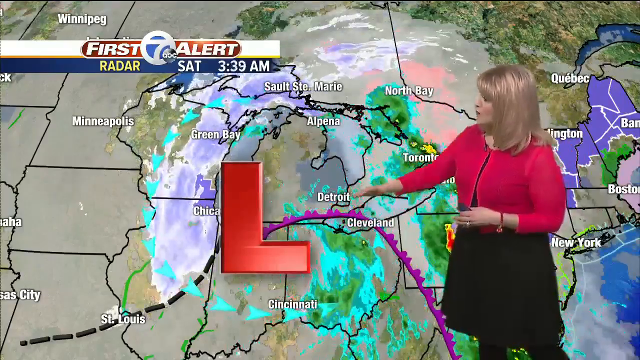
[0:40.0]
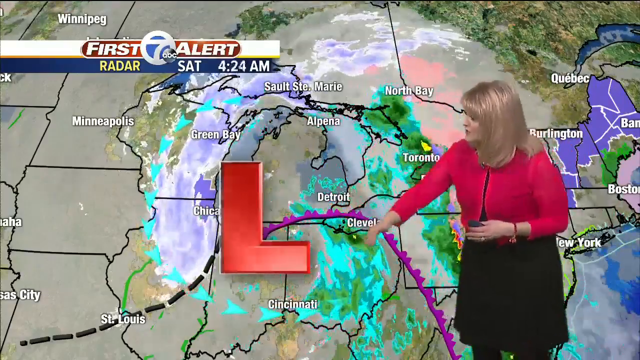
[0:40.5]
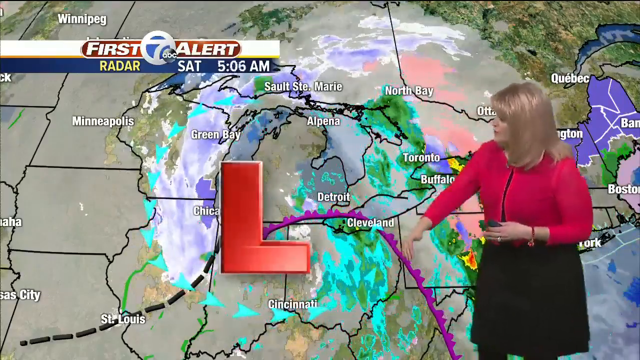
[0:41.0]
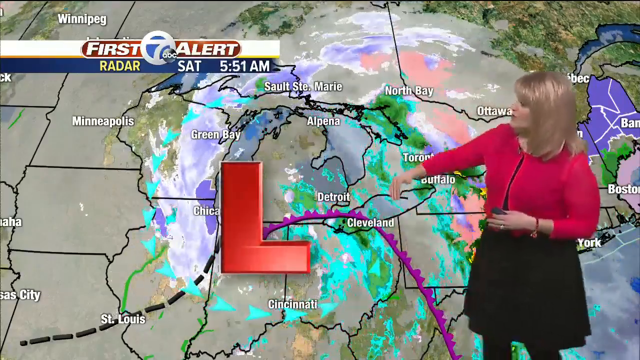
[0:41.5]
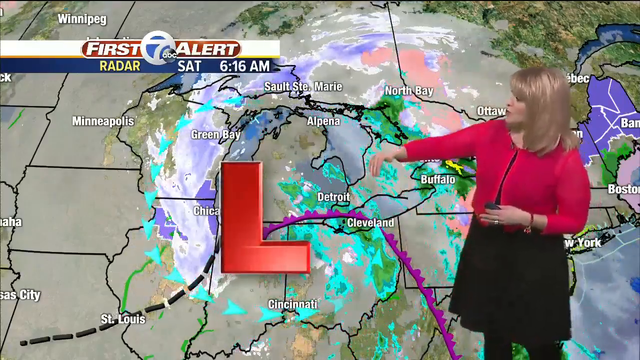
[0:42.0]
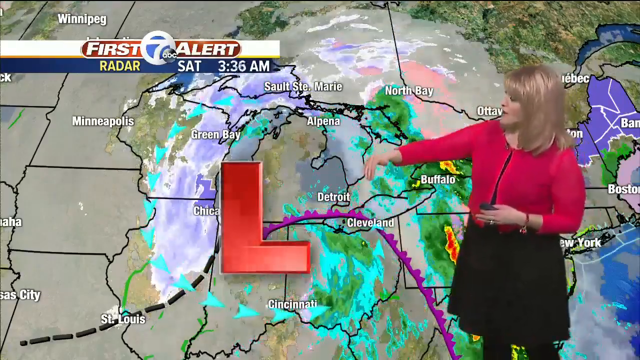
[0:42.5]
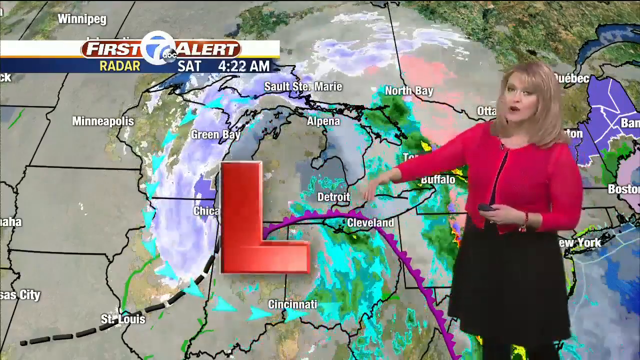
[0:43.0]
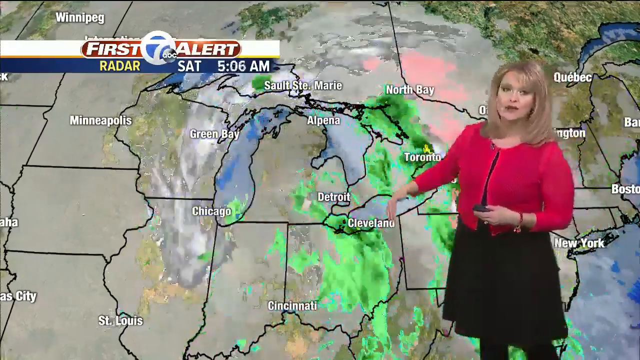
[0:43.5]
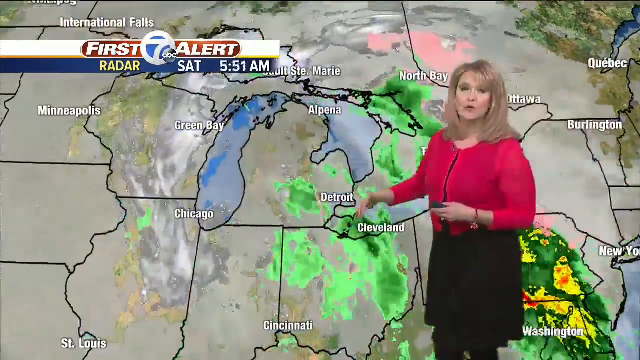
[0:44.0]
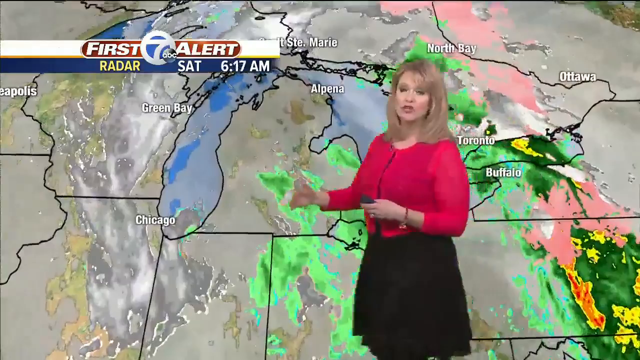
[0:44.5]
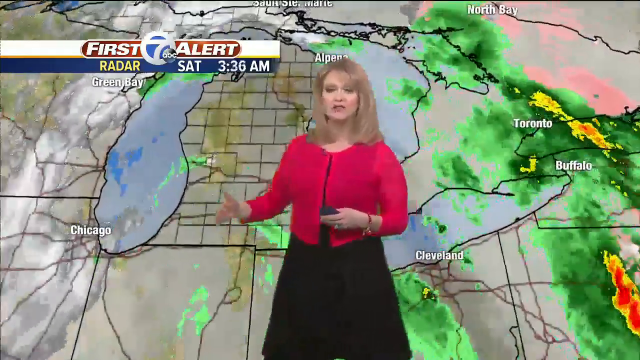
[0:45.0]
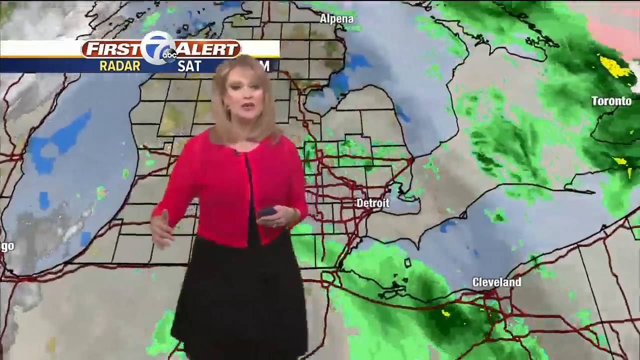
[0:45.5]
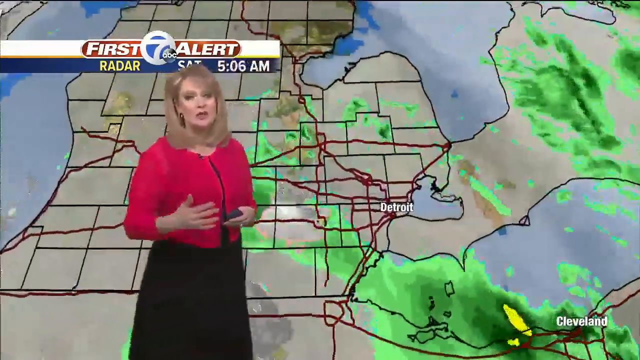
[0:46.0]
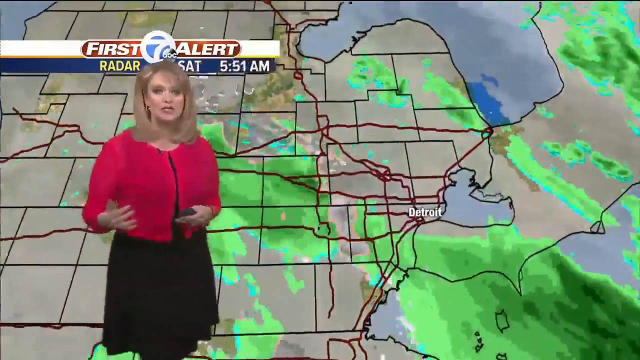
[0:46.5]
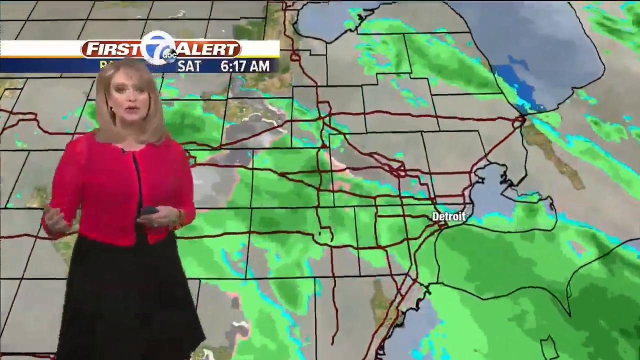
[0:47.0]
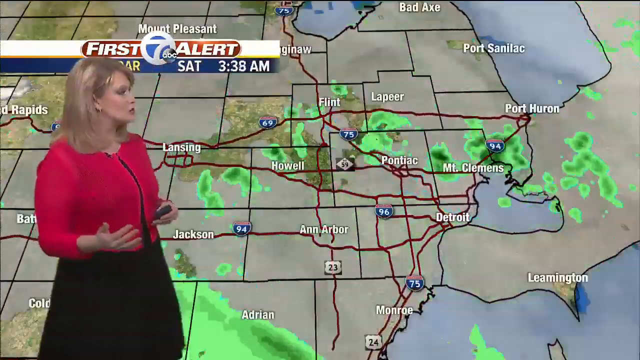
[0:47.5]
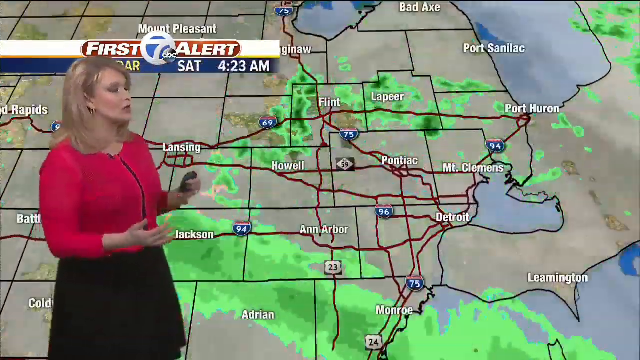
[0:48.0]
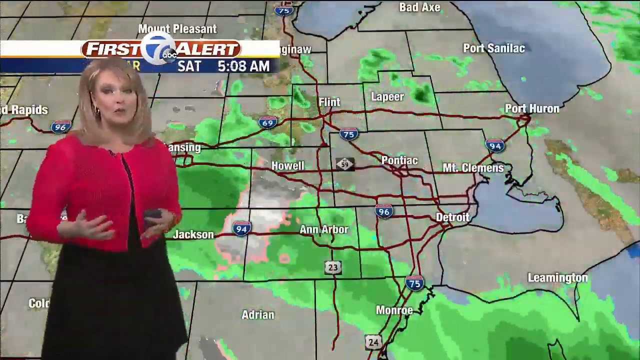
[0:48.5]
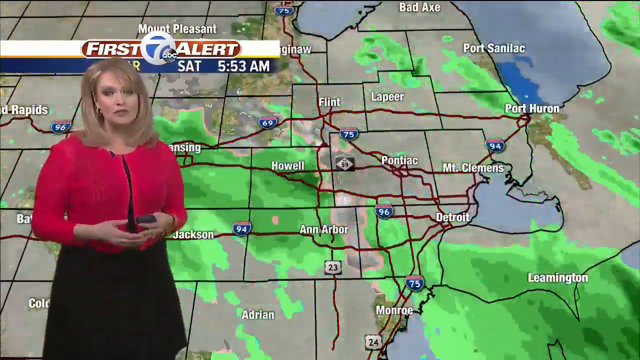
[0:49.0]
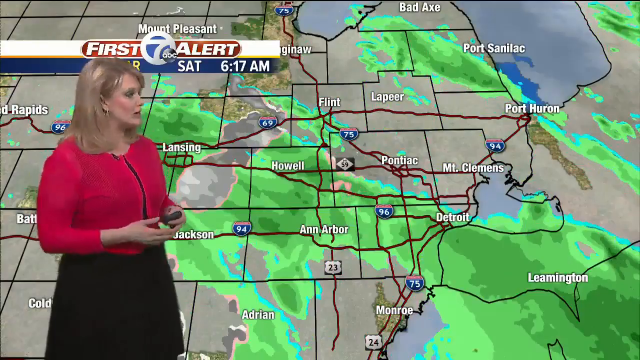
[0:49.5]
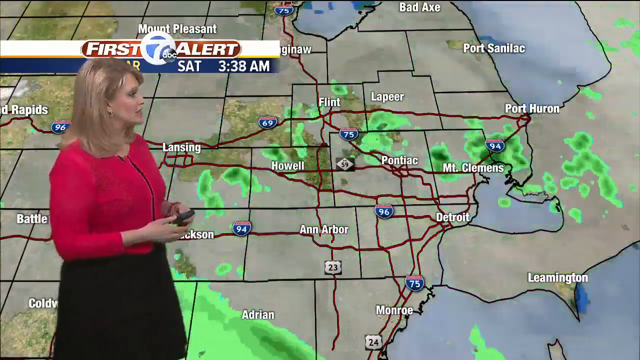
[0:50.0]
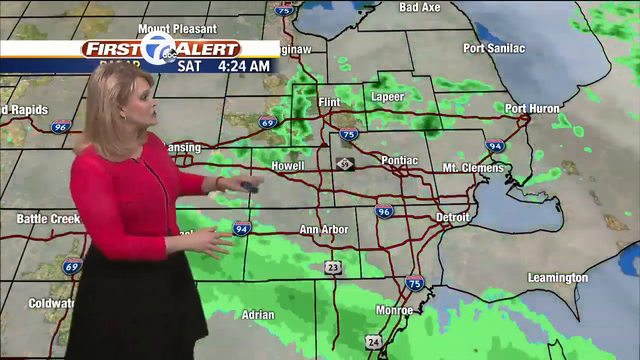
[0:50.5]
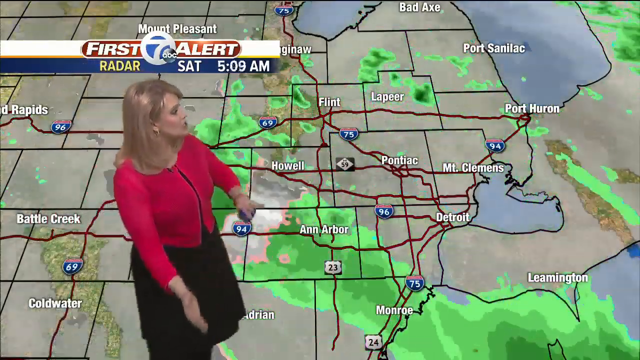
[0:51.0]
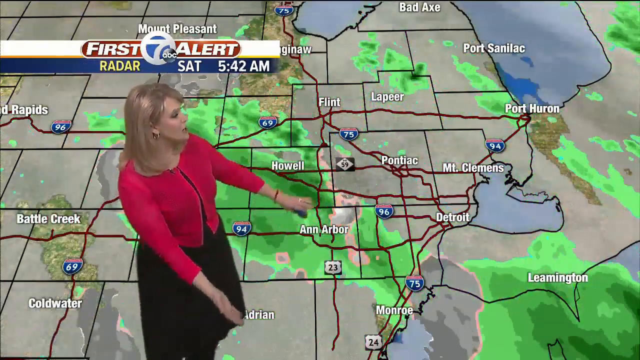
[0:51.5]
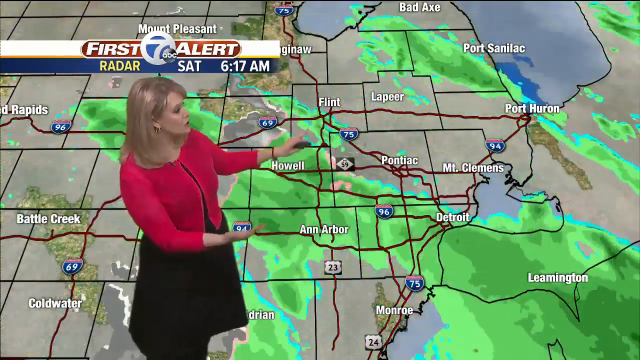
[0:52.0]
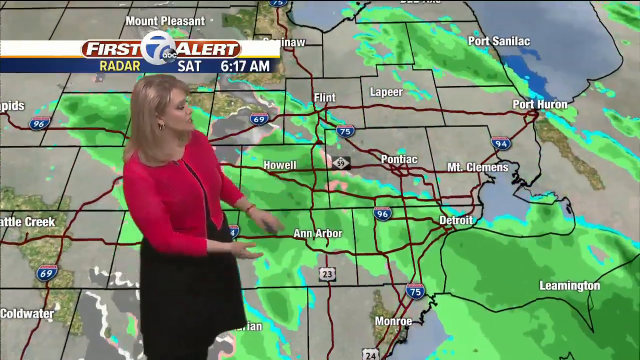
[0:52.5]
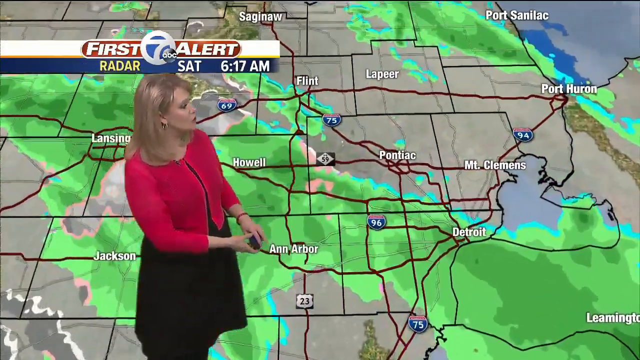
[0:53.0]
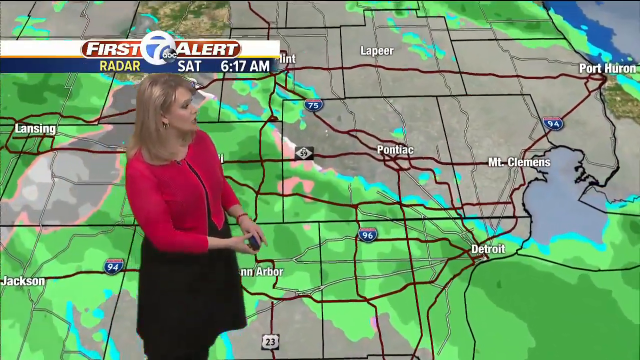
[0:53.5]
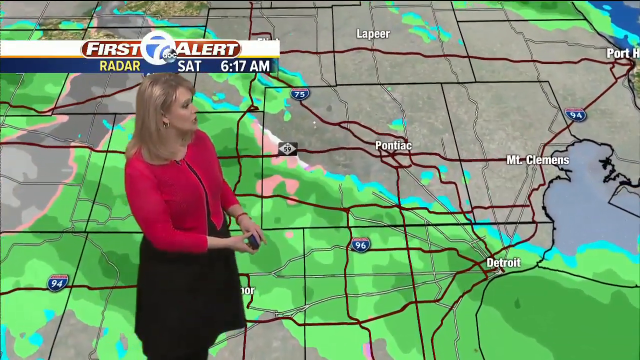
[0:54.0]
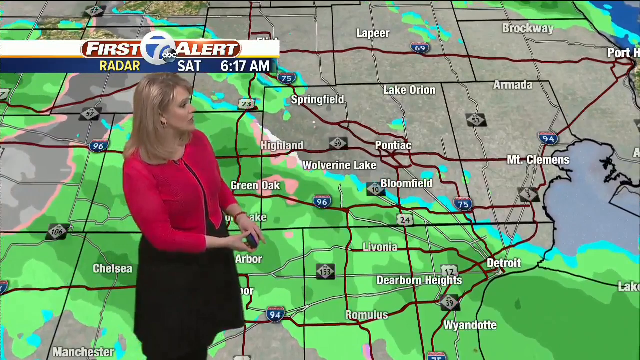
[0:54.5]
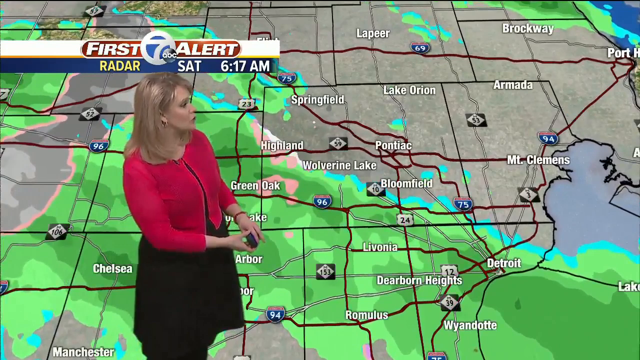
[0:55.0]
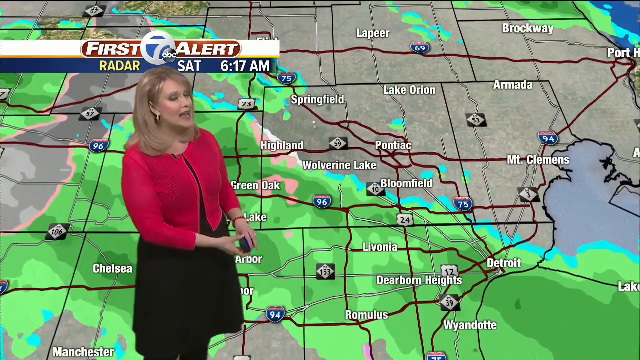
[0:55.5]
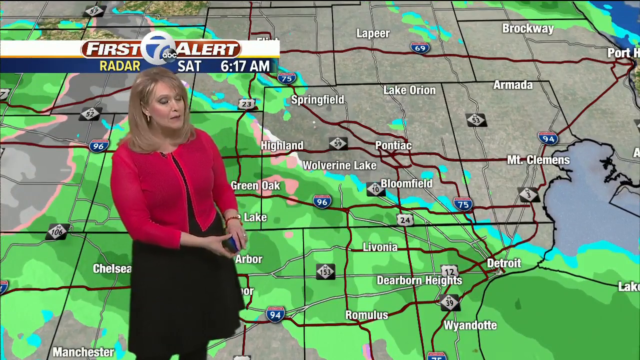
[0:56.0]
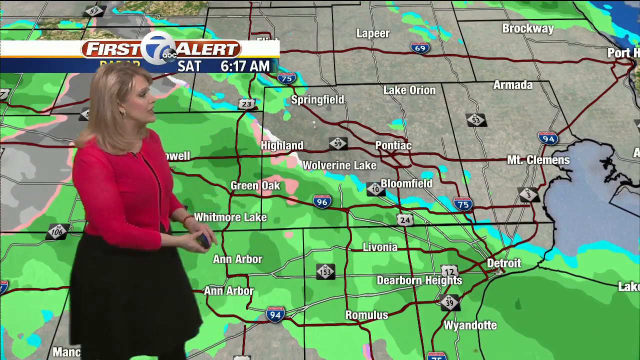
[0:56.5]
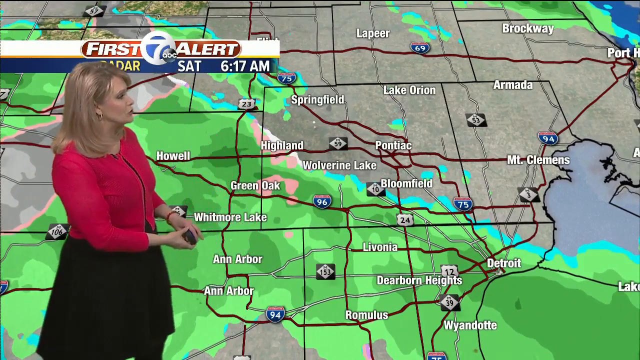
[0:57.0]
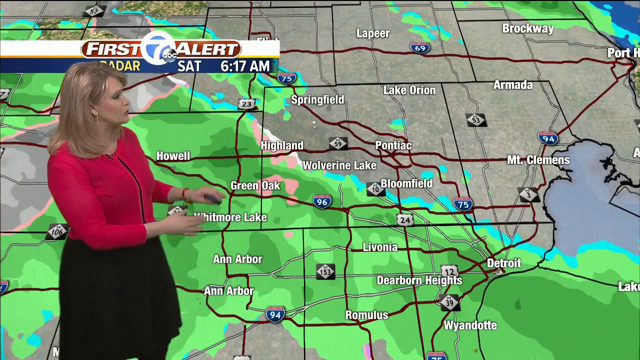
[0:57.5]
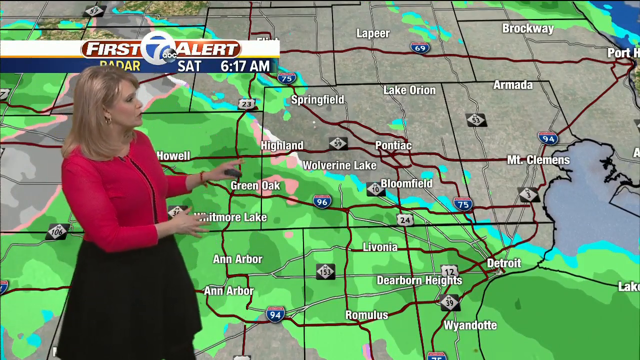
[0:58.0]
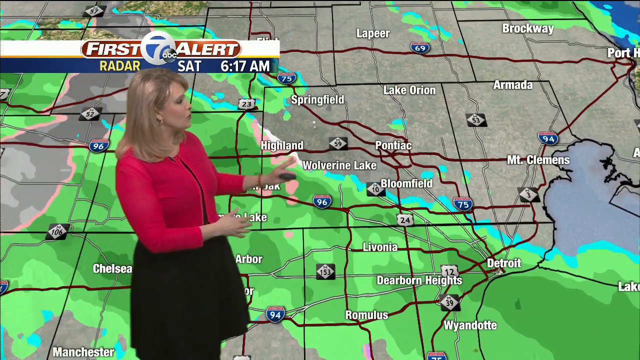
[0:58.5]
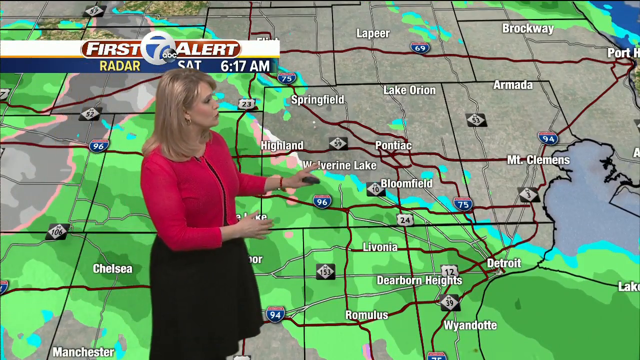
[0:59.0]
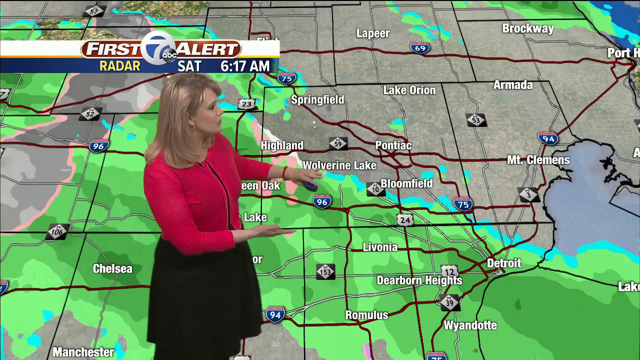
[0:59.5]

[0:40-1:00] A big red owl appears on the map, and the meteorologist makes a circular motion around Detroit and Cleveland. The view zooms in on the radar for Saturday, around the morning hours.